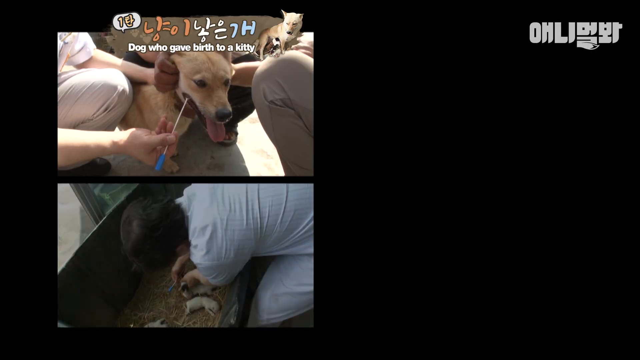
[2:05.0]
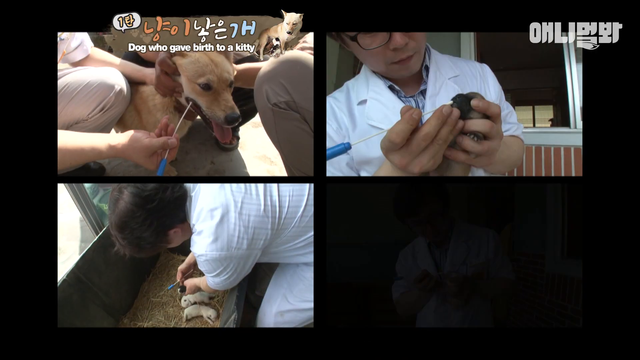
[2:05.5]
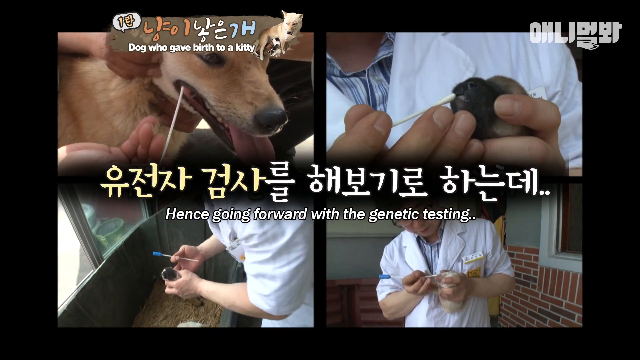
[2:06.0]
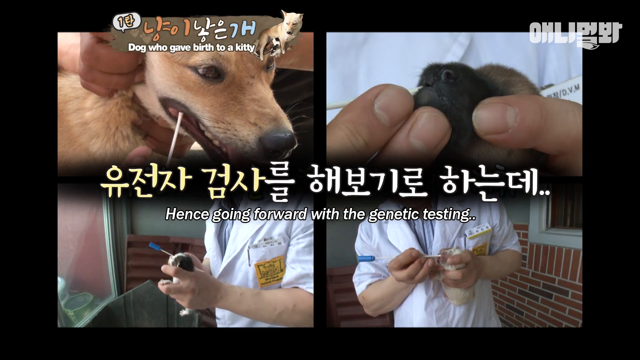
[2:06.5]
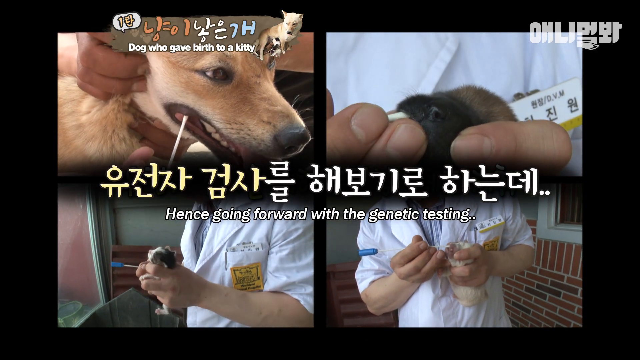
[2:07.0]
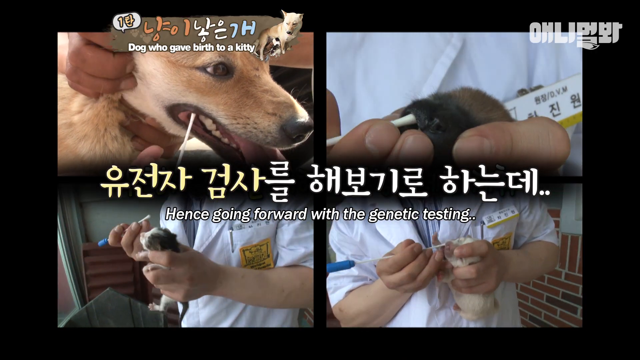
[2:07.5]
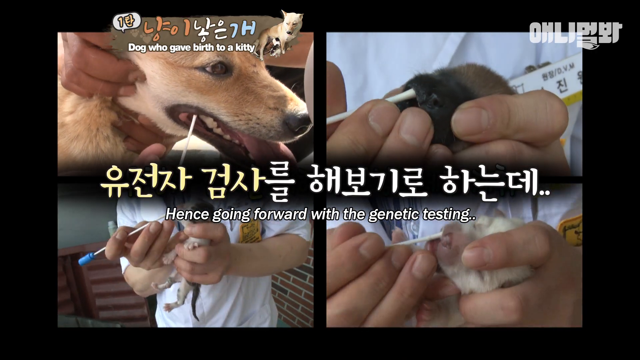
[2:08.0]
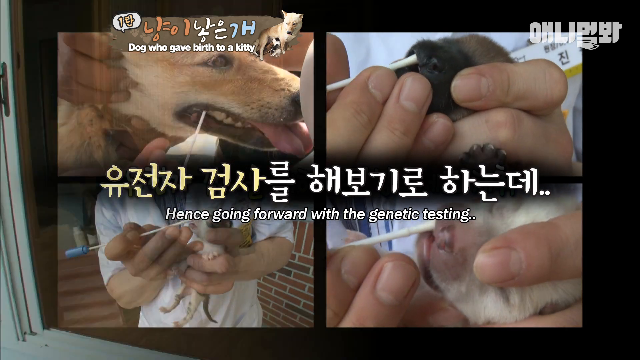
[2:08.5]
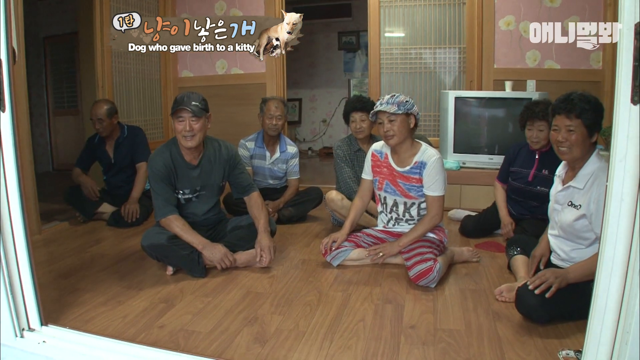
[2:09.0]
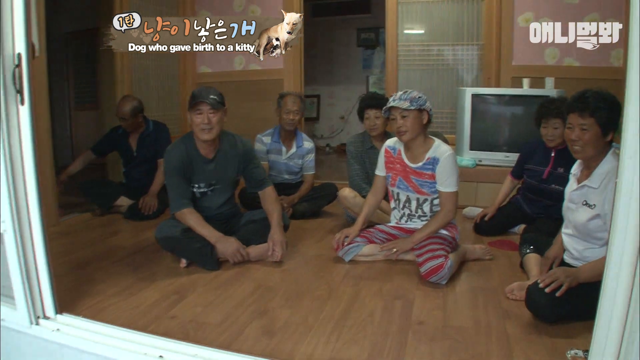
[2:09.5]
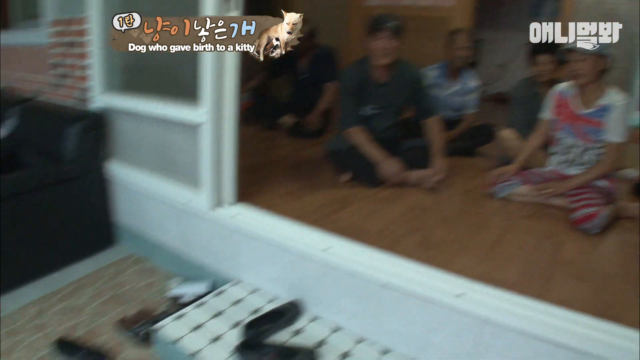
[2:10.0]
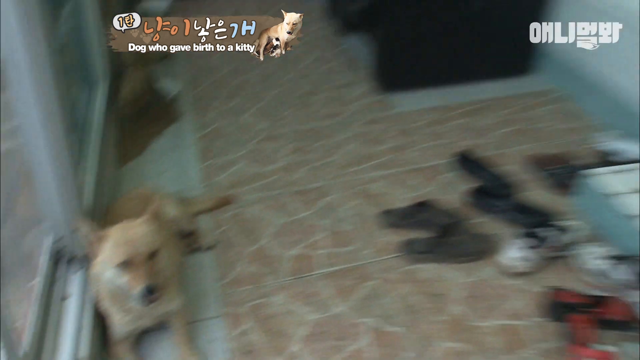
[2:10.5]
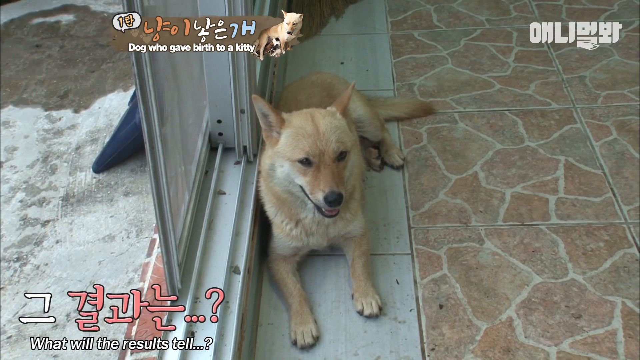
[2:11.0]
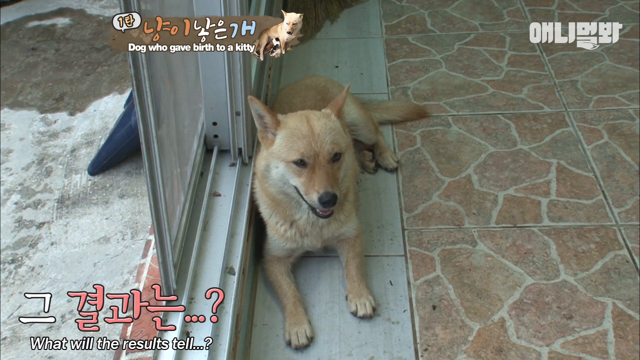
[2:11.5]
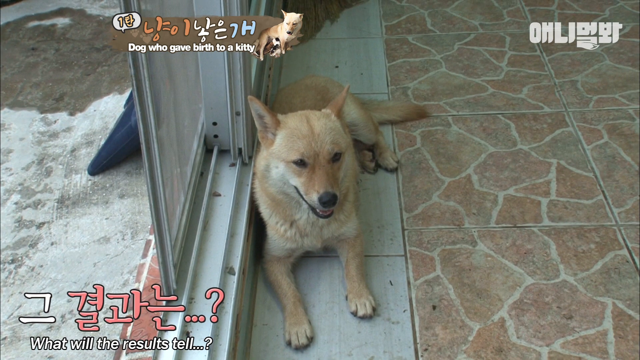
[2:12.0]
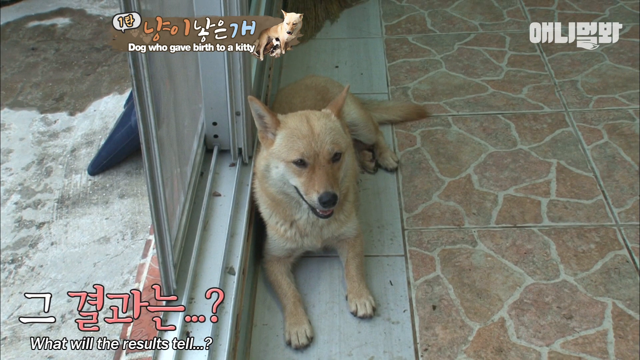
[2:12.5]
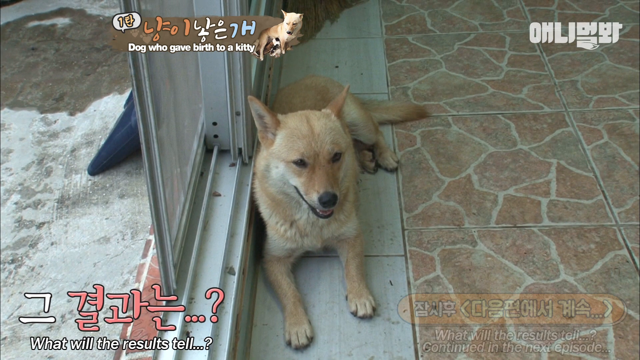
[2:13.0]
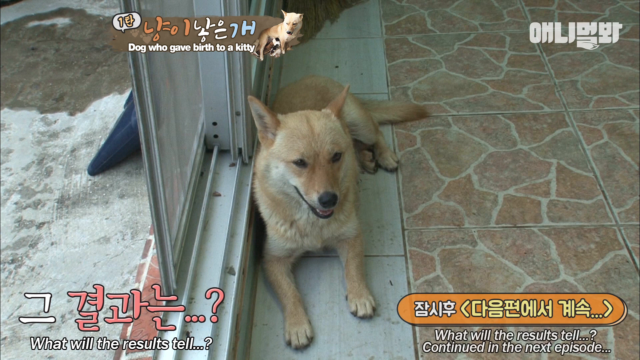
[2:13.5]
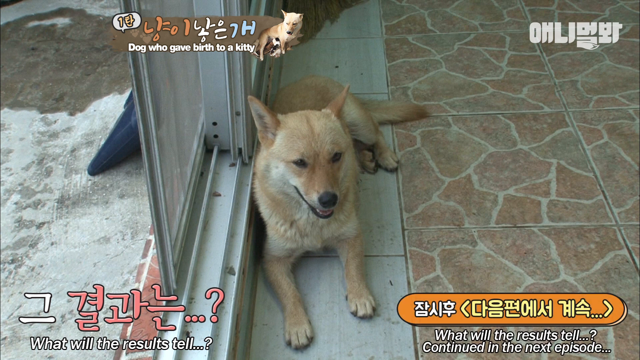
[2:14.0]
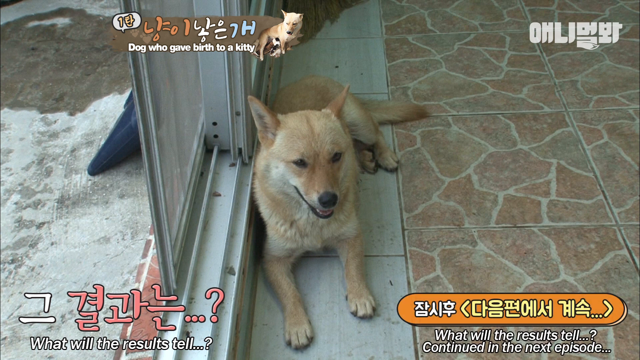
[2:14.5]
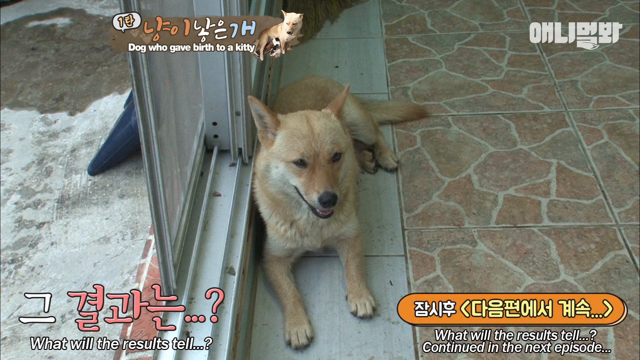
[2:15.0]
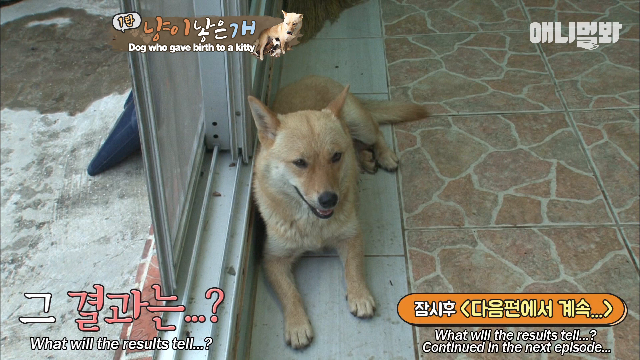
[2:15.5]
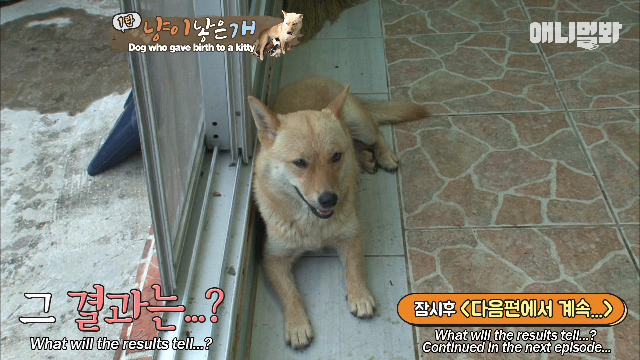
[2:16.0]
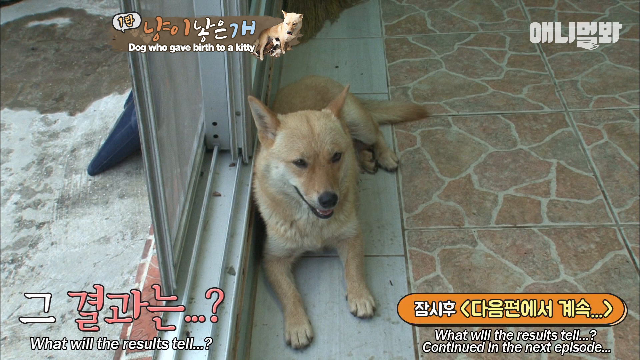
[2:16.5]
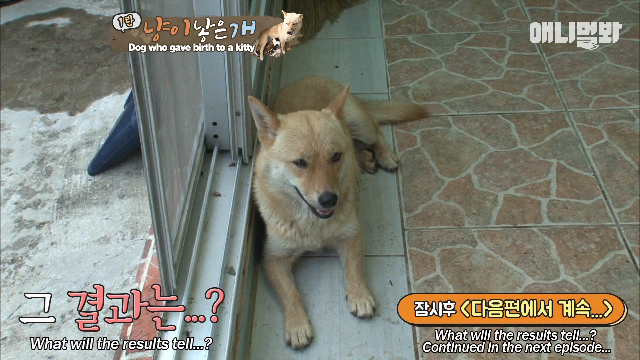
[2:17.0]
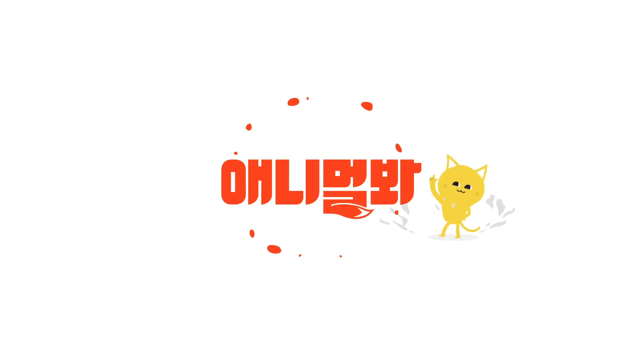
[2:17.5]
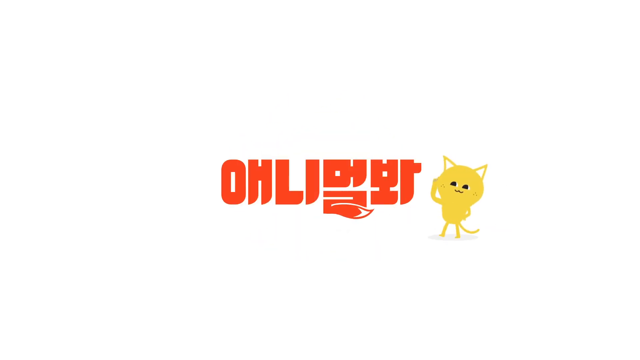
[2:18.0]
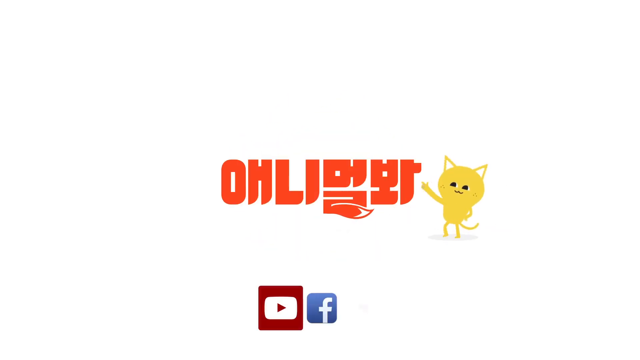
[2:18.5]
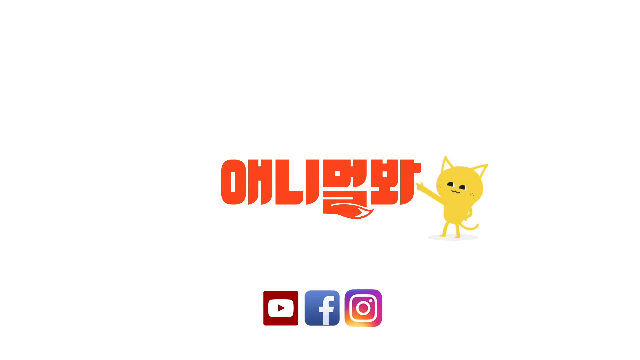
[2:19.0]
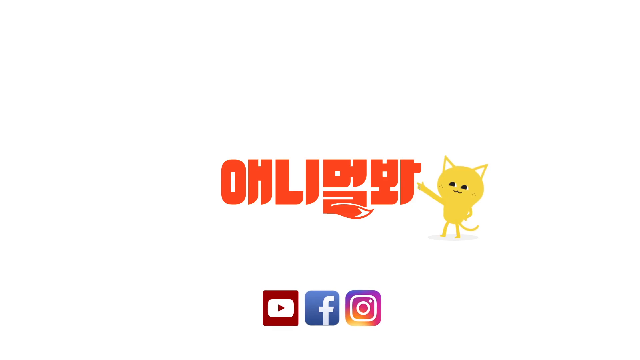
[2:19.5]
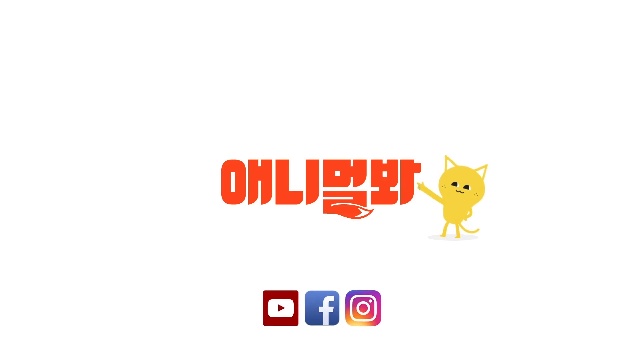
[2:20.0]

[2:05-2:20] An adult dog and a kitten are in a building during daytime. The dog sits on the floor, panting. At some point the camera pans to show a small crowd of people sitting and staring at the dog. Chinese and English subtitles appear to describe how the dog is being genetically tested to make sure the cat is not its natural offspring, and then say that the next episode will show the results of the test. The video then fades out into what appears to be a transition screen ending the episode, with social media icons at the bottom, presumably telling viewers to follow these pages.